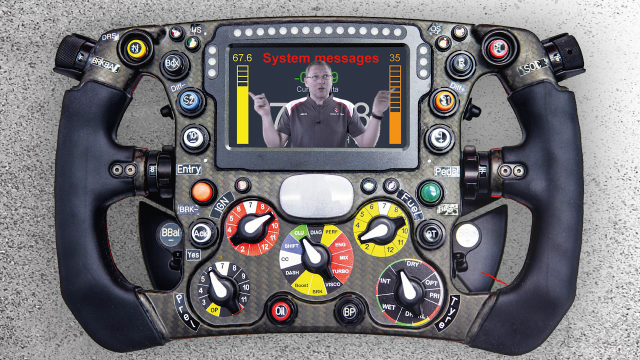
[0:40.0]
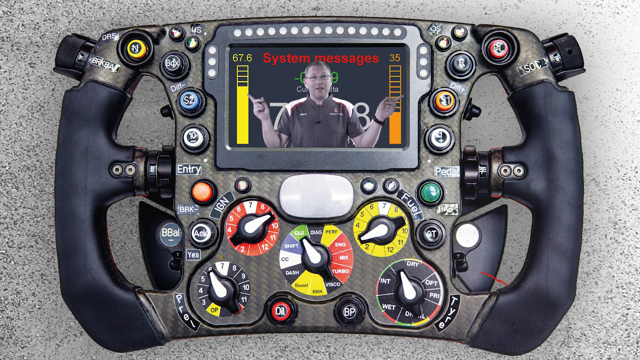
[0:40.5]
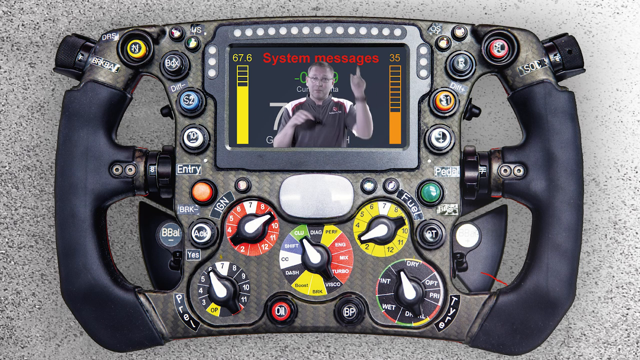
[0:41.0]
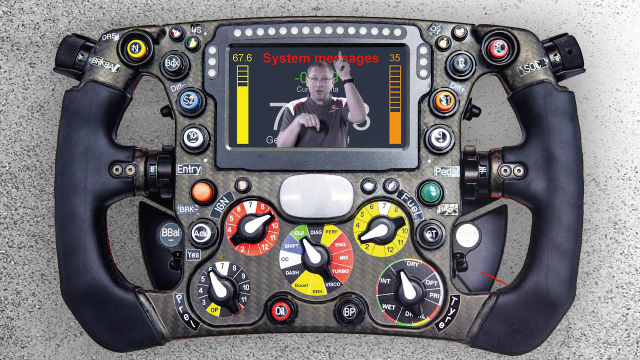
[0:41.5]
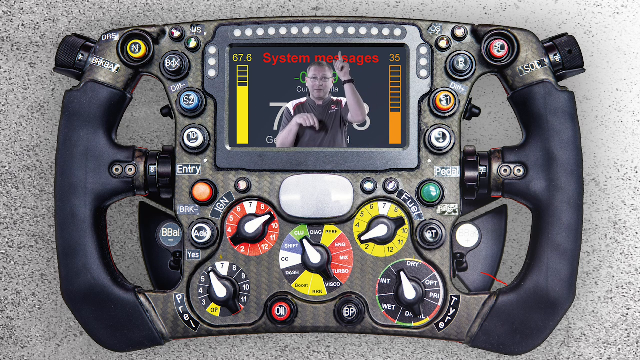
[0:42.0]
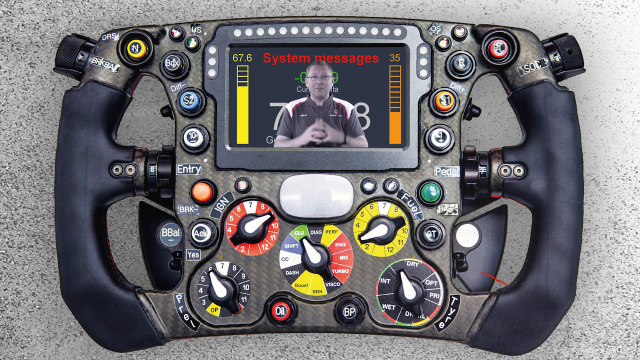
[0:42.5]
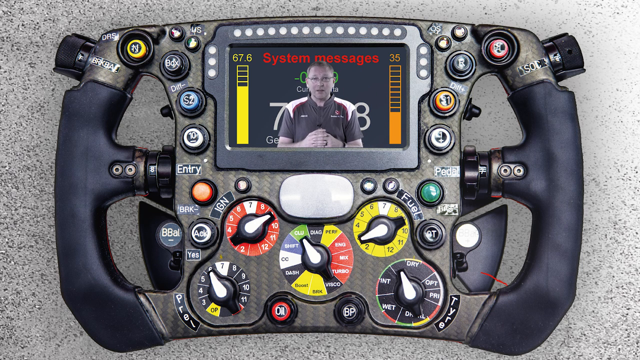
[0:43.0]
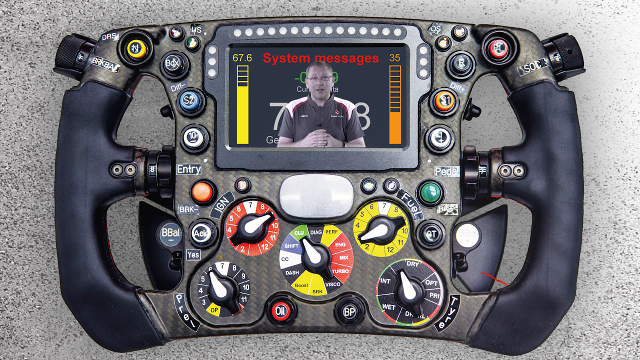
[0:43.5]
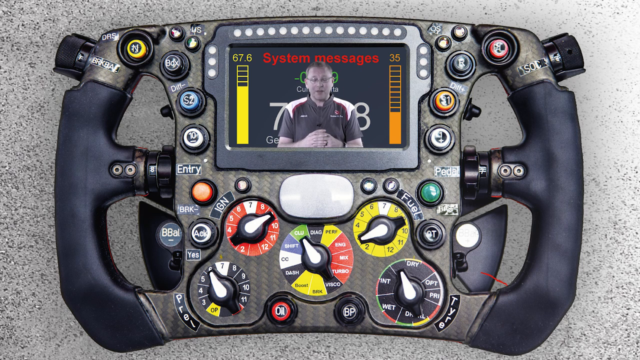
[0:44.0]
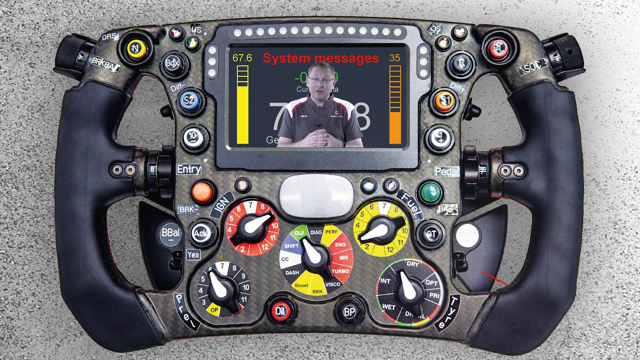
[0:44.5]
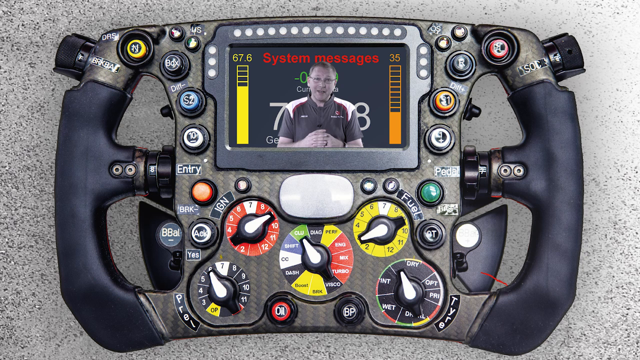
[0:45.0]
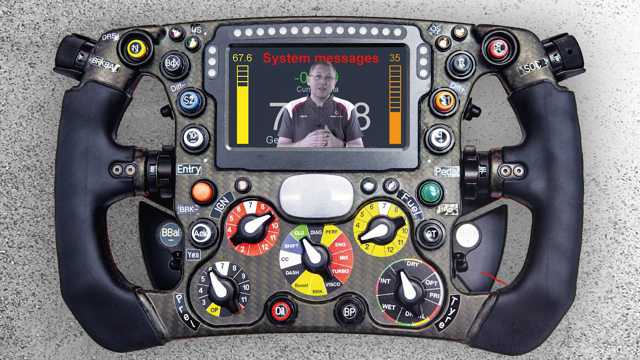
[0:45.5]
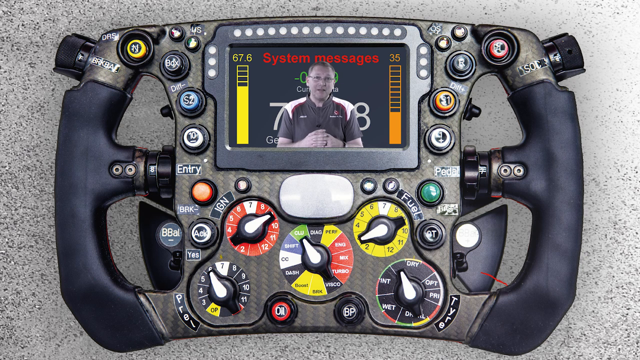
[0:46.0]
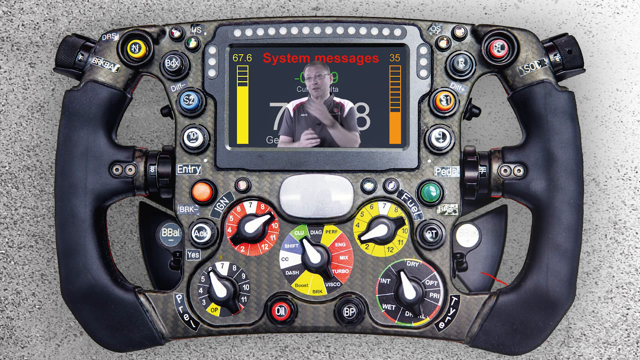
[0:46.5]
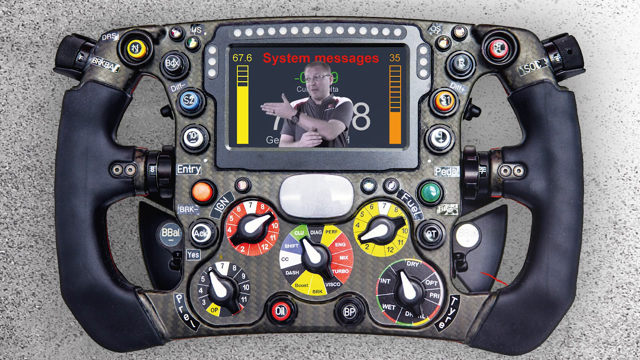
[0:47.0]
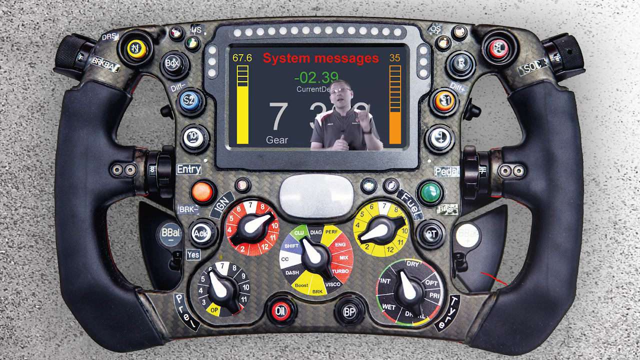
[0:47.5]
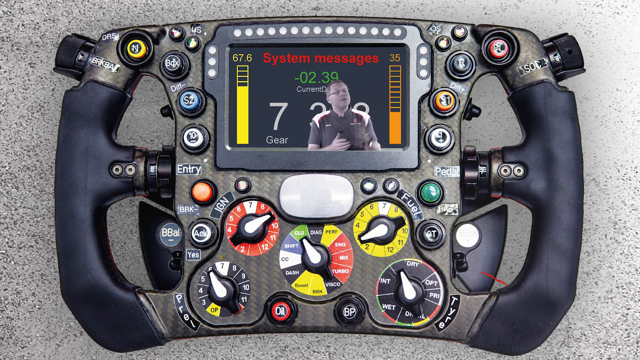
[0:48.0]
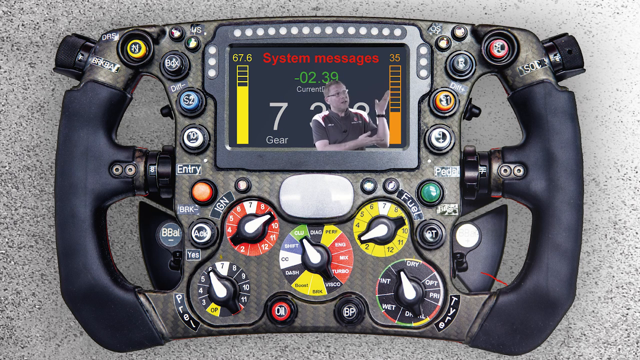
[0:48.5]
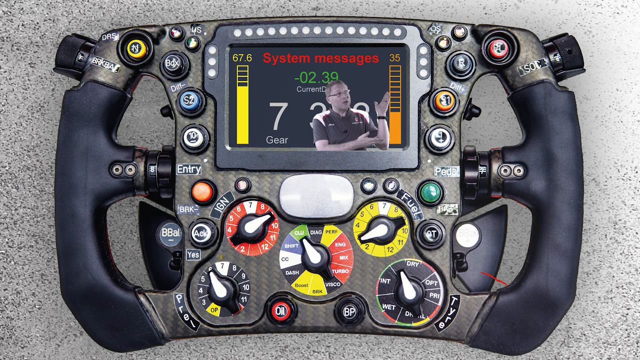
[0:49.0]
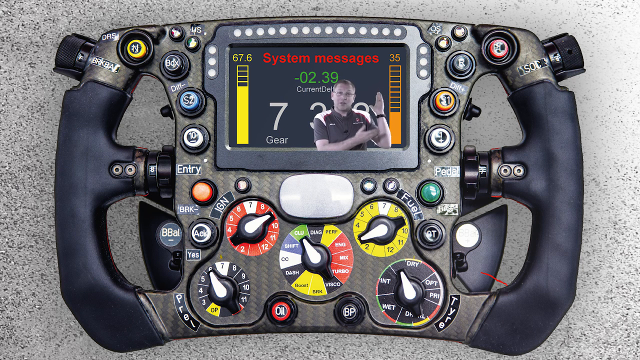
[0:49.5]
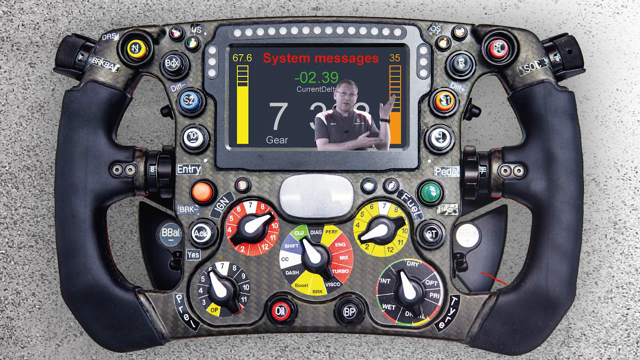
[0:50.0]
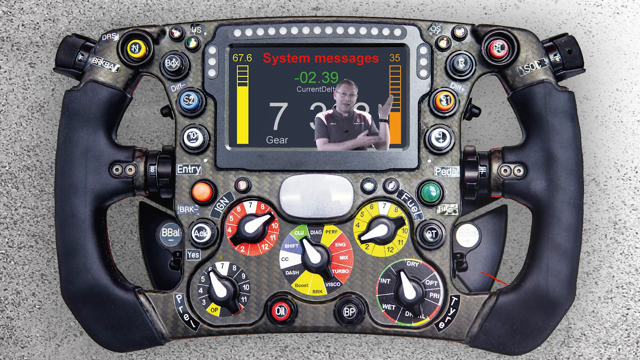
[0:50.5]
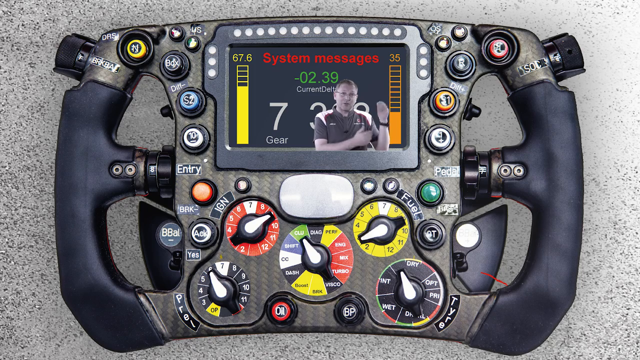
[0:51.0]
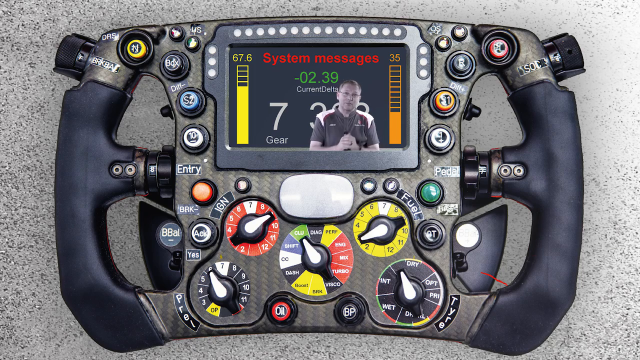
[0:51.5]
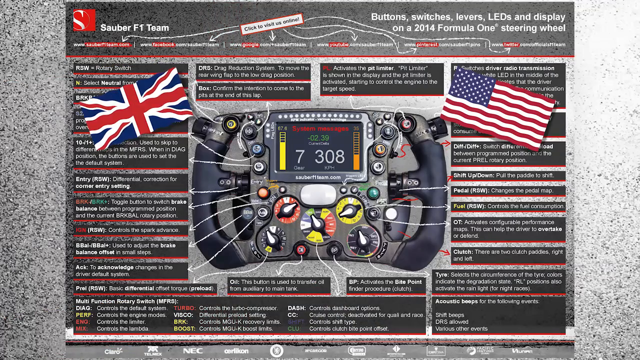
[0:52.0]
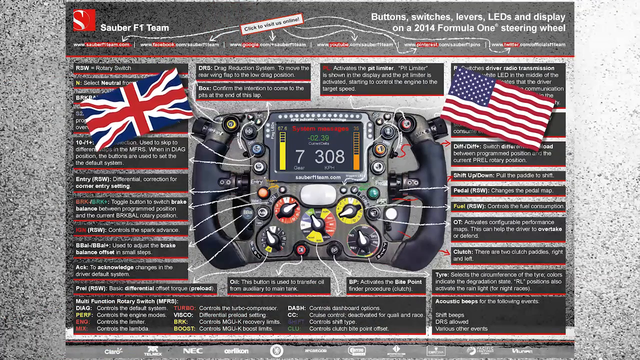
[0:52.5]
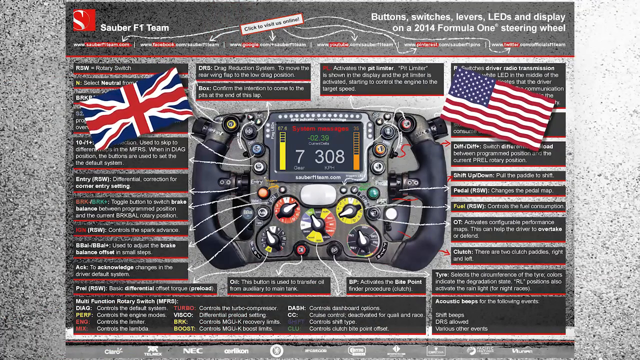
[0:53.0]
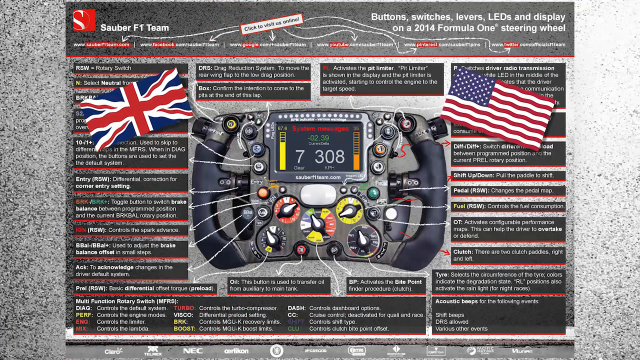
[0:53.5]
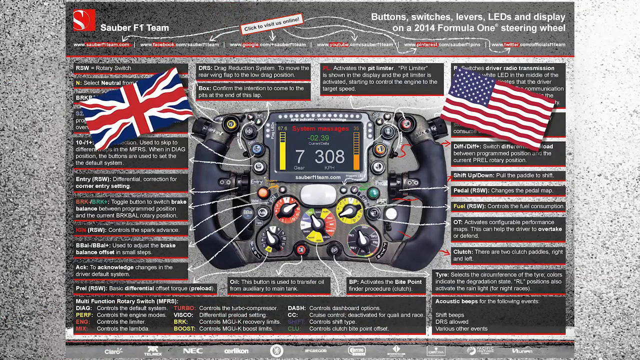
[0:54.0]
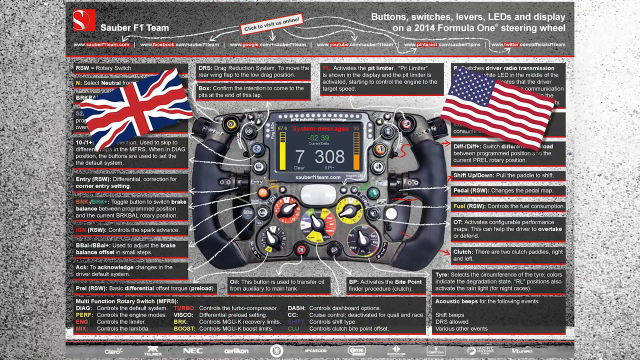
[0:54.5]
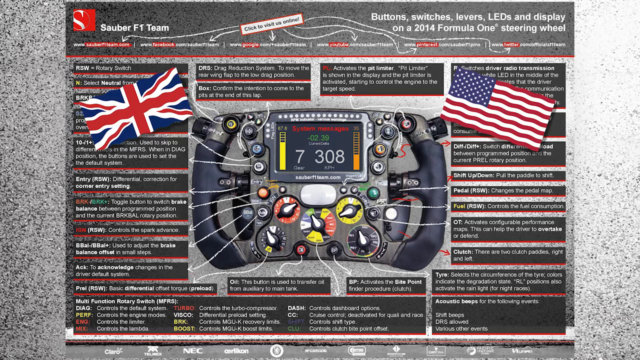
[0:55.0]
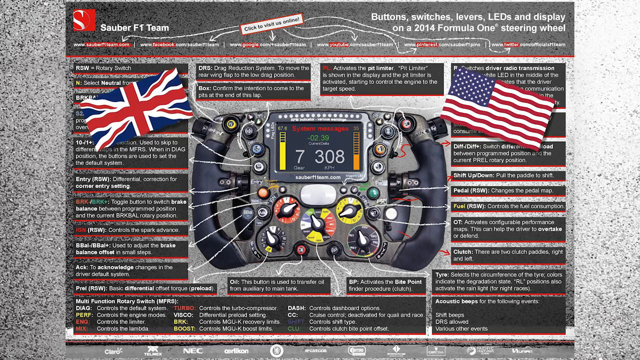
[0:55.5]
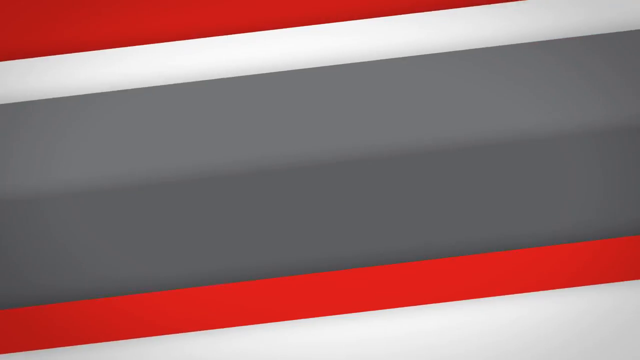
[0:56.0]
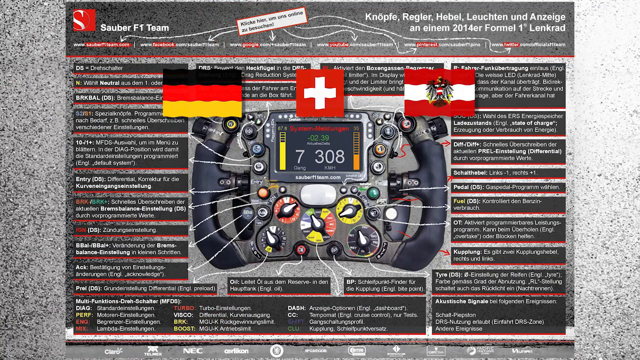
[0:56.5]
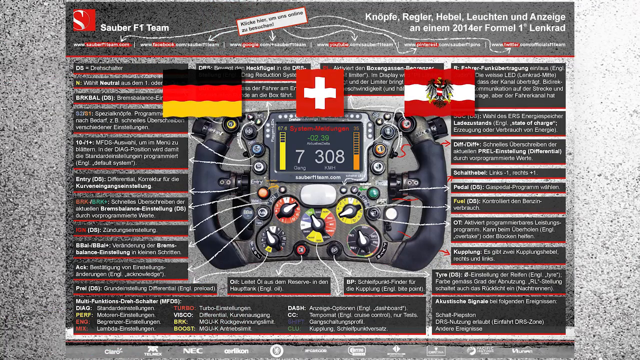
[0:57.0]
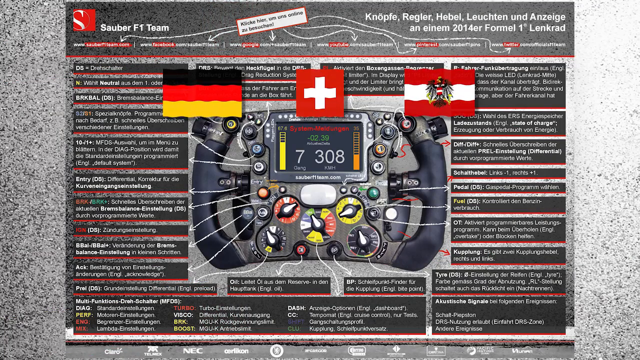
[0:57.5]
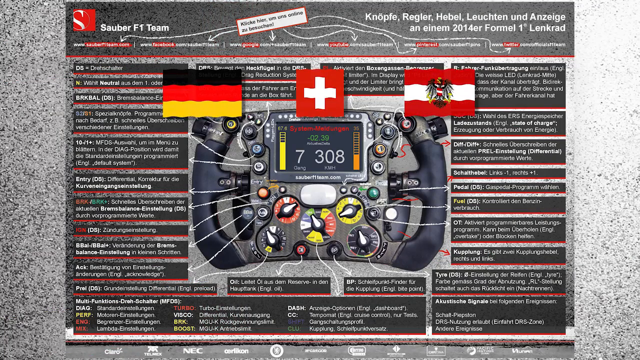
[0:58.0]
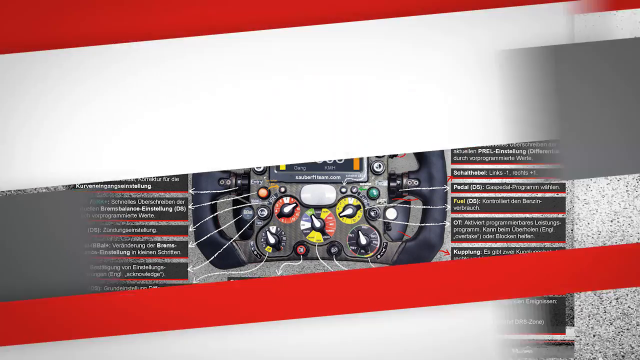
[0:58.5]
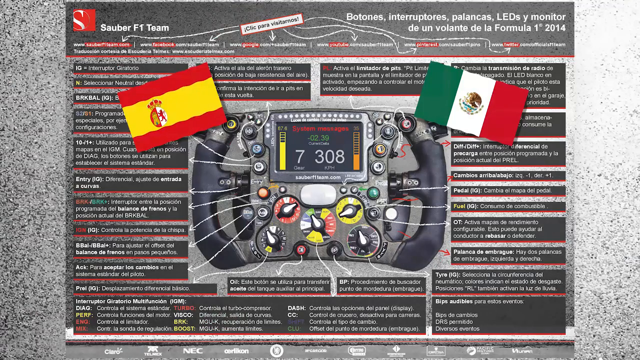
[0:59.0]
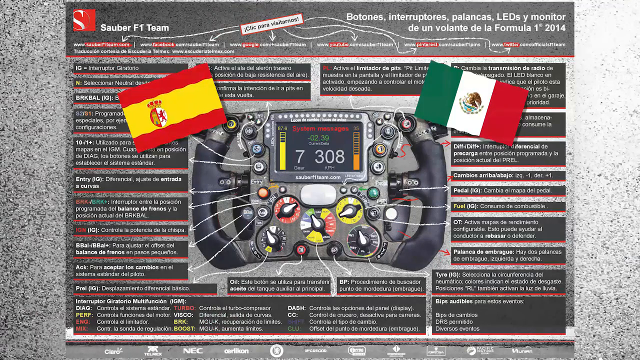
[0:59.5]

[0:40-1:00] The man in the black collared t-shirt, with white skin, points outward with both fingers on the small screen, maybe about two inches across, of the handheld video game controller, which is somewhat like a Game Boy shaped like a steering wheel. The controller is on either concrete or maybe gray carpet and has many toggles and buttons. The man points to all the different parts as he talks to the camera, and system messages and other items are visible. The video then flashes to a new screen showing "Sauber F1 Team", an American flag and a UK flag, along with another brochure with labels pointing out the parts of the controller. The controller is now on a gray speckled concrete background, and the video flashes through flags of other countries, as if the instructions are available in many languages.